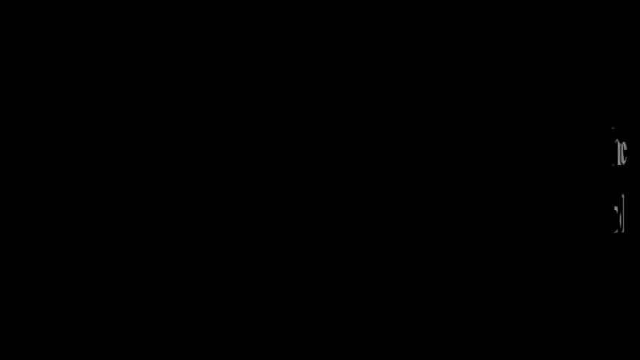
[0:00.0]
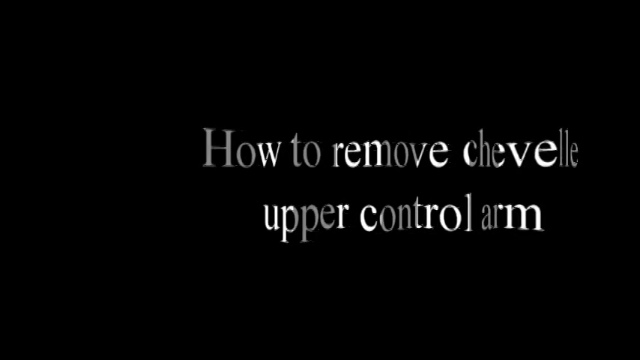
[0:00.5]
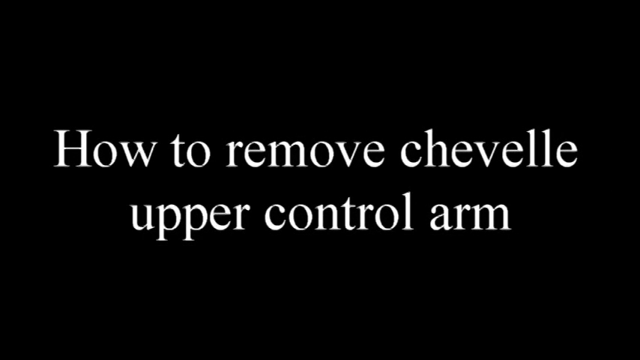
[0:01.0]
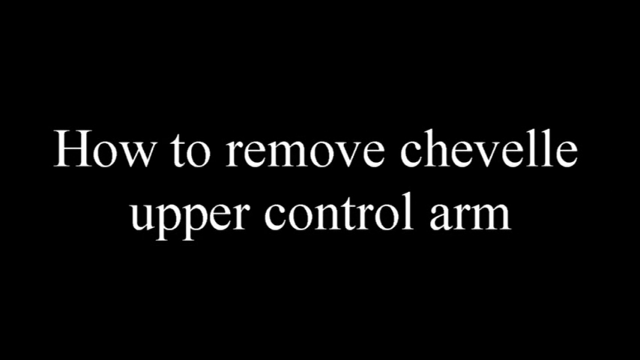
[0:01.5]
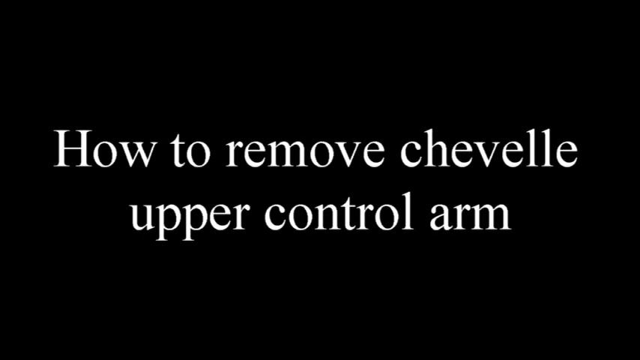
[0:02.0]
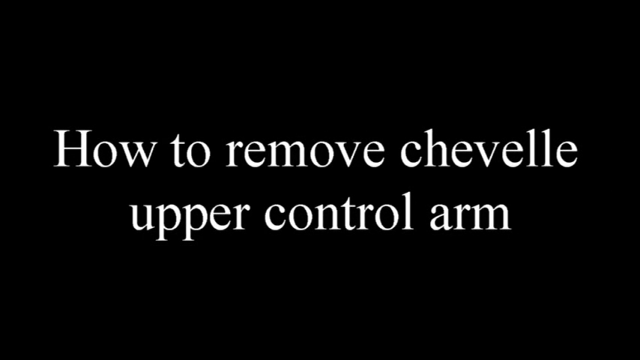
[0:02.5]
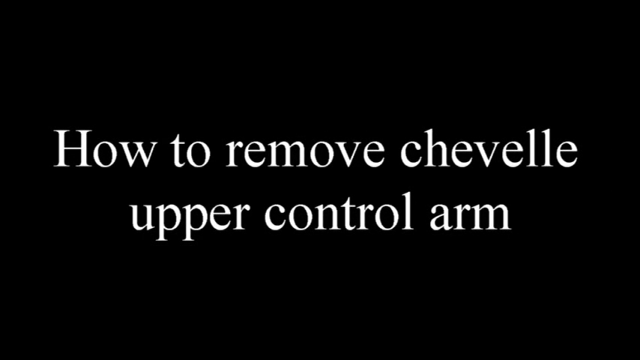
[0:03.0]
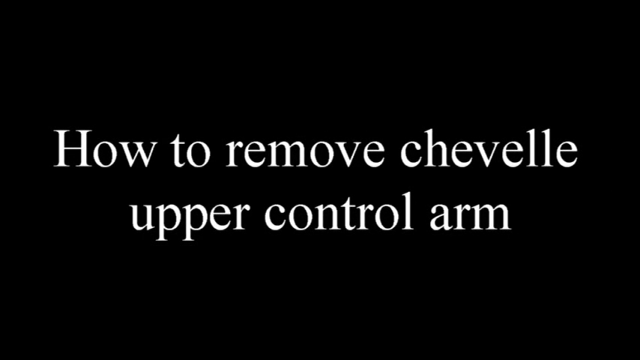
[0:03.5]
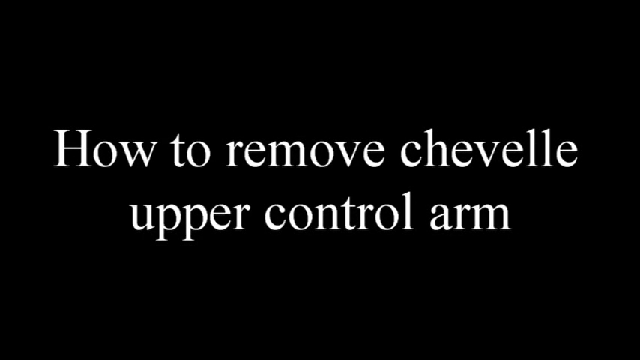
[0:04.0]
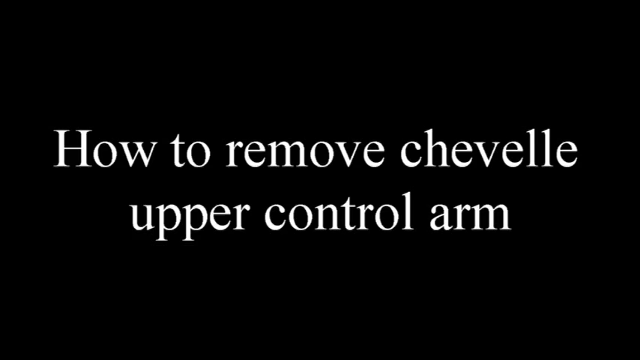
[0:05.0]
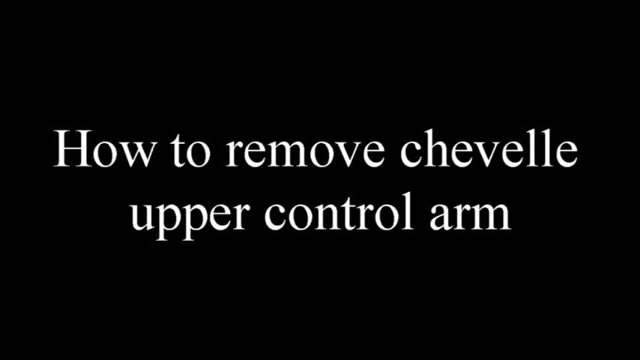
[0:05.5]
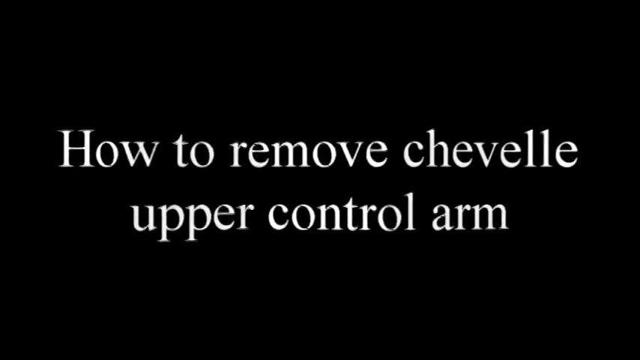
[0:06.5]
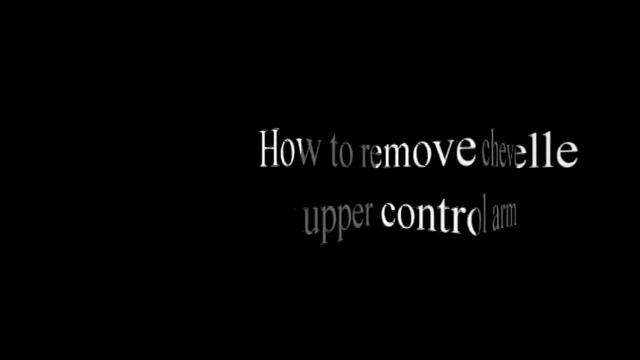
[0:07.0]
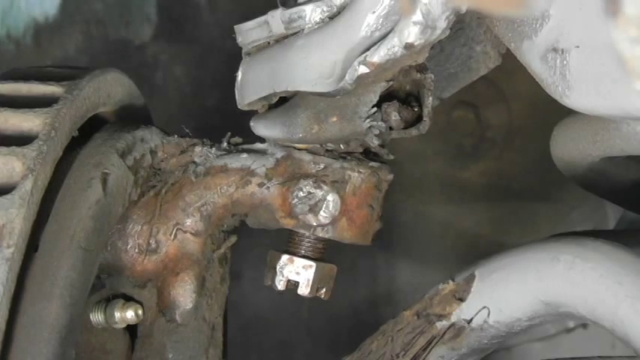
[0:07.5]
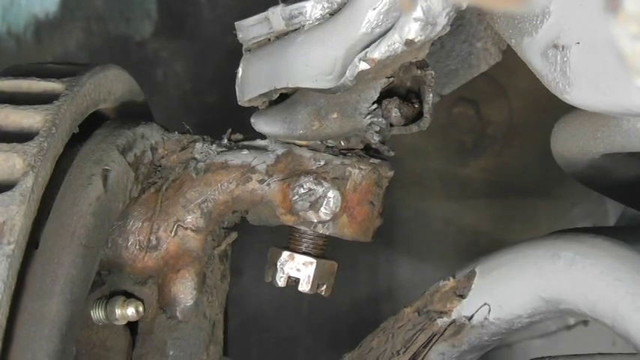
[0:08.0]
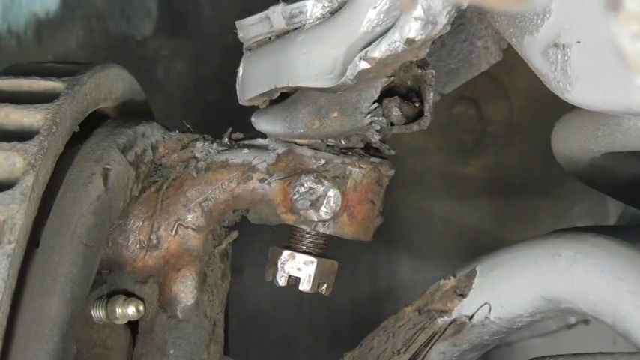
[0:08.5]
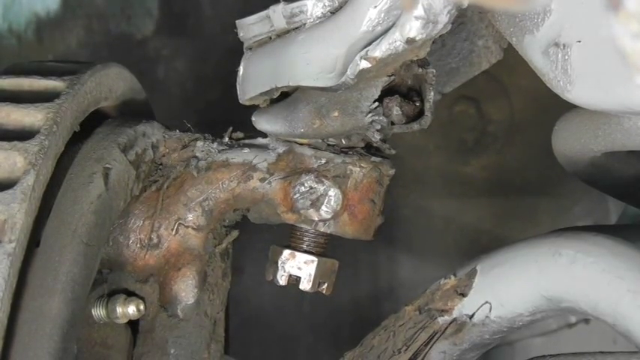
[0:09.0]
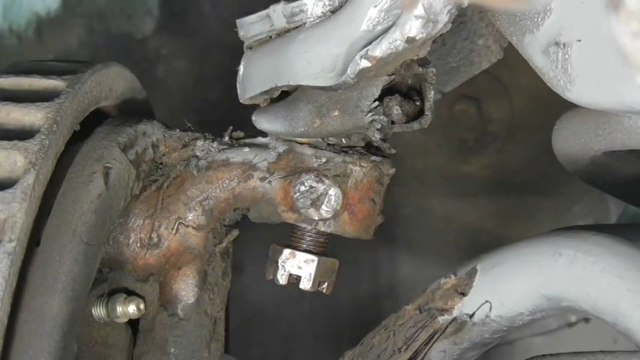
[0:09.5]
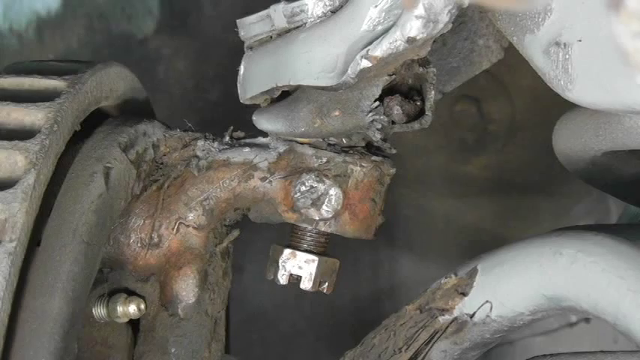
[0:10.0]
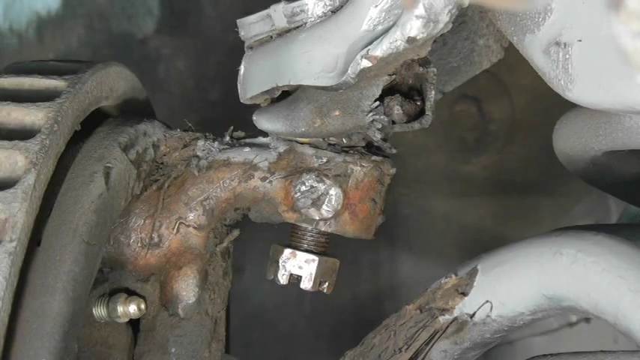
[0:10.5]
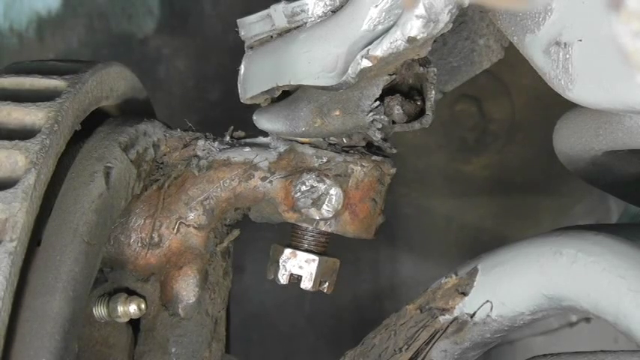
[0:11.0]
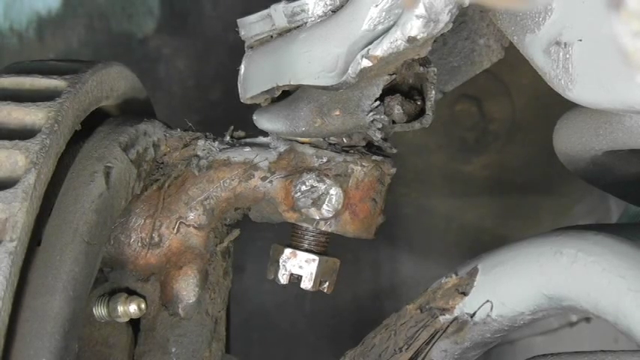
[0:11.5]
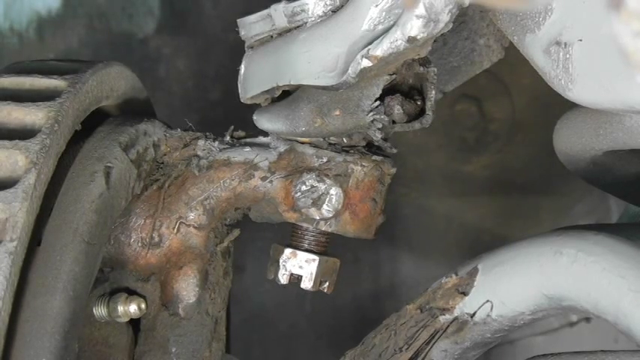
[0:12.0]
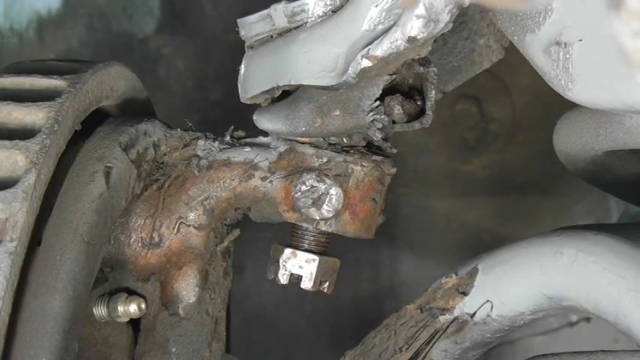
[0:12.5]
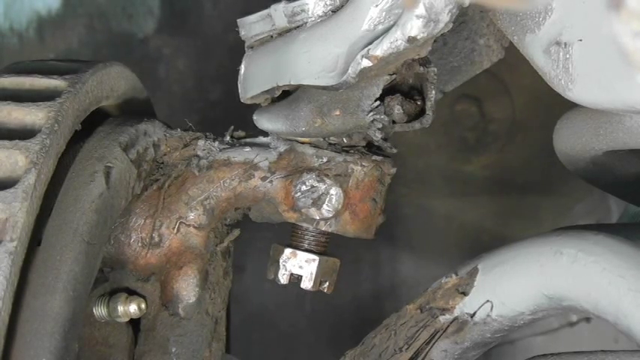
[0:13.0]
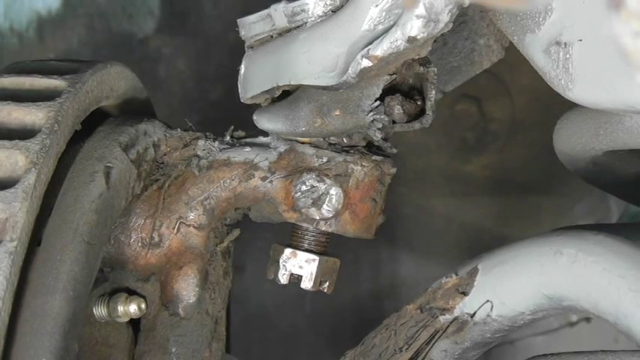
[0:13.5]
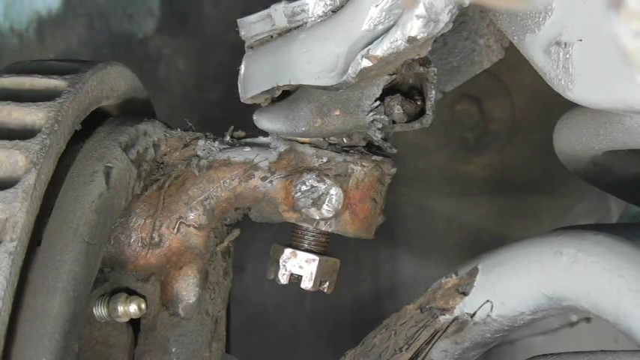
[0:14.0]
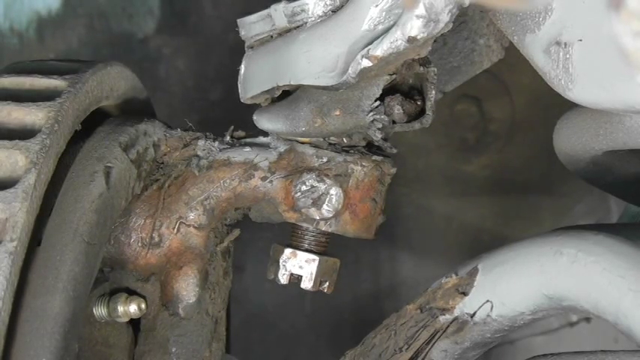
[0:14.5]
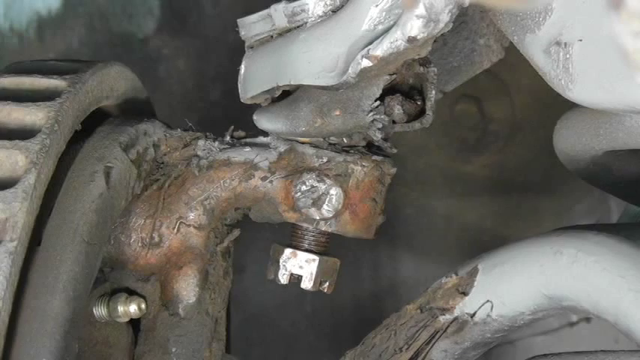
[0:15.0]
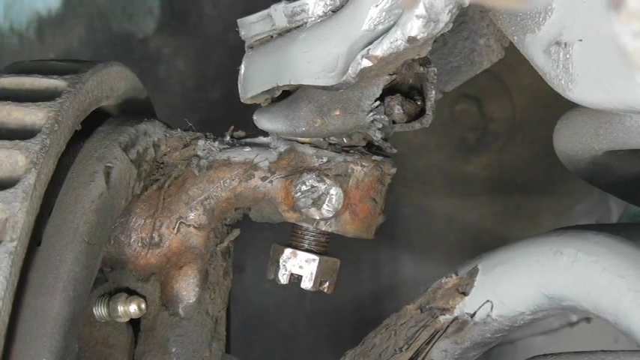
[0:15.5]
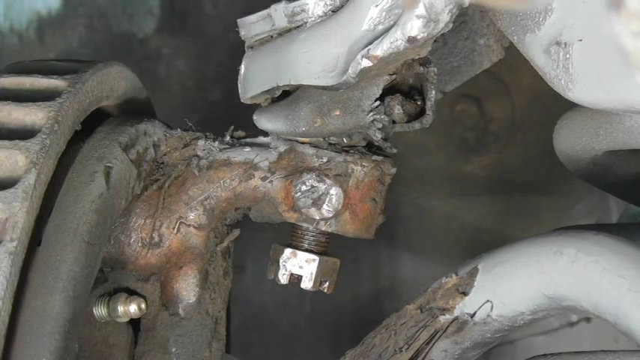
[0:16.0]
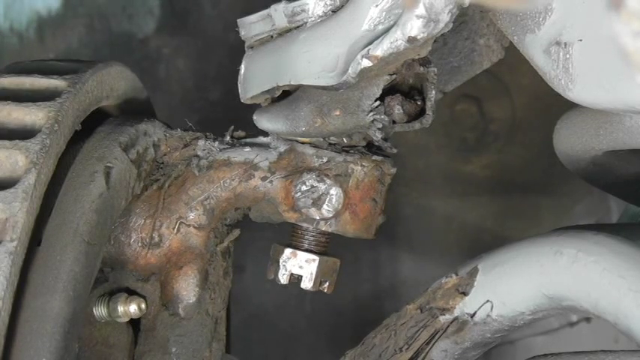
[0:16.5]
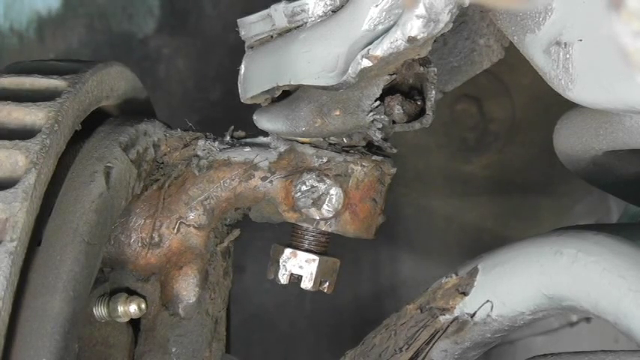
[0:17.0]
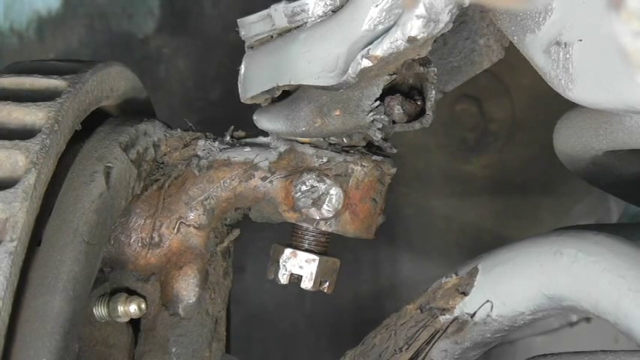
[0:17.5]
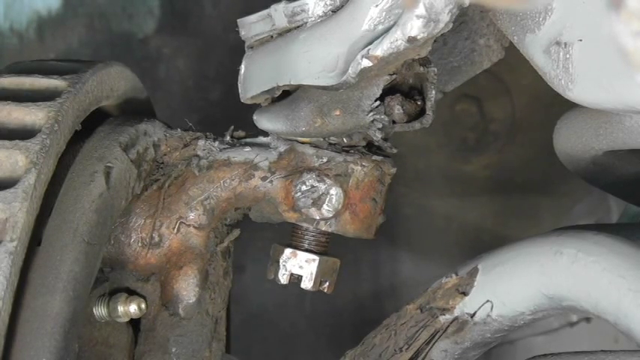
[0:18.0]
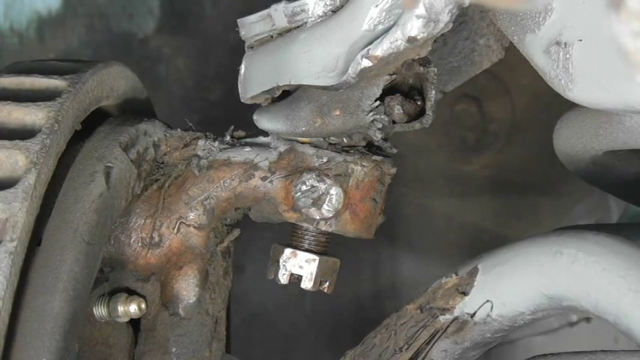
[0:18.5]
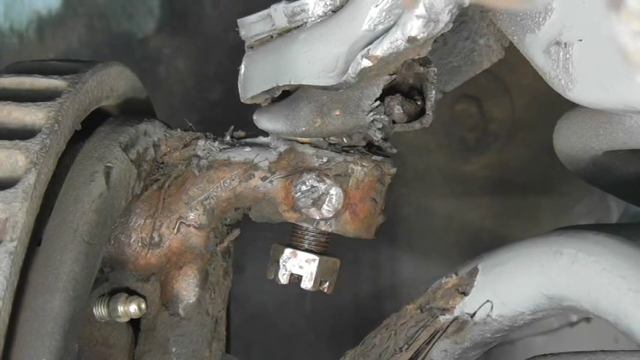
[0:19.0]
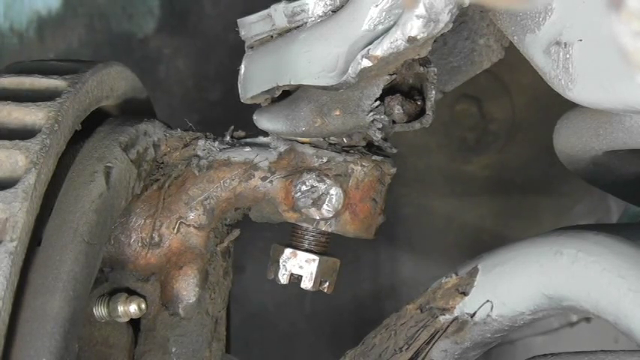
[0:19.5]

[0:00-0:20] The video opens on a black background with white text reading "how to remove Chevelle upper control arm"; the text kind of floats in from the right side. The next shot shows the interior or underside carriage of a car. Its mechanical workings look very rusted and damaged, with what appears to be corrosion and perhaps a lot of broken or missing pieces. There is a huge nut and bolt at the bottom. The area is perhaps the wheel well of the car. The entire underside is in shades of gray and steel coloring with some red rust.